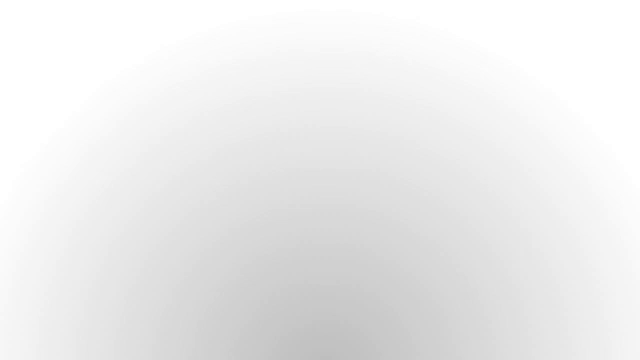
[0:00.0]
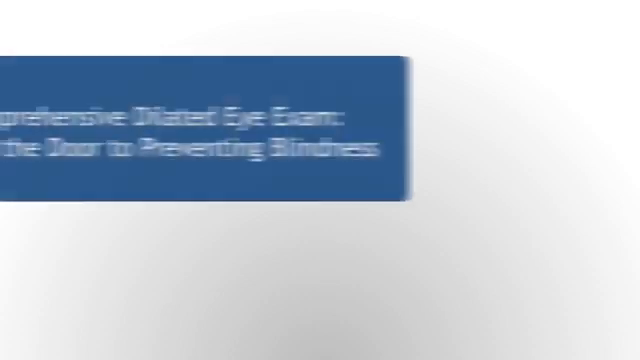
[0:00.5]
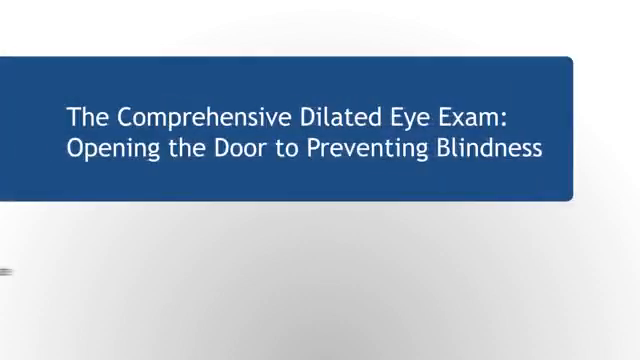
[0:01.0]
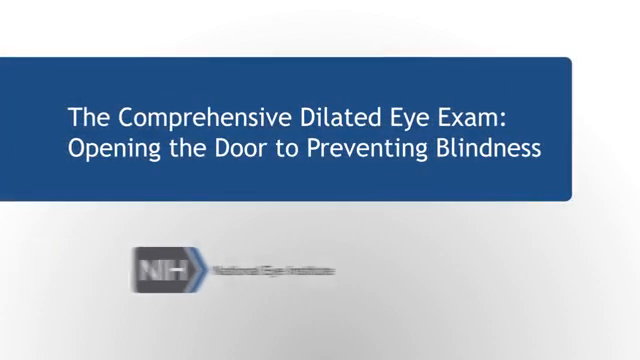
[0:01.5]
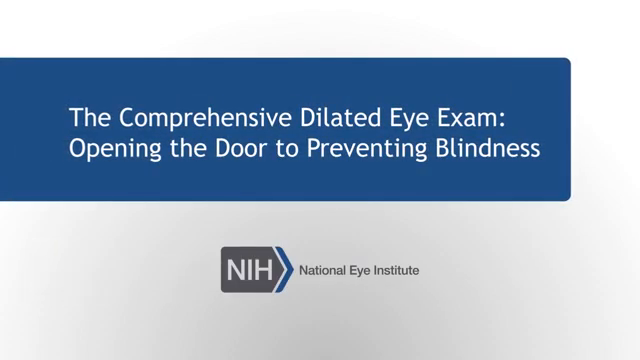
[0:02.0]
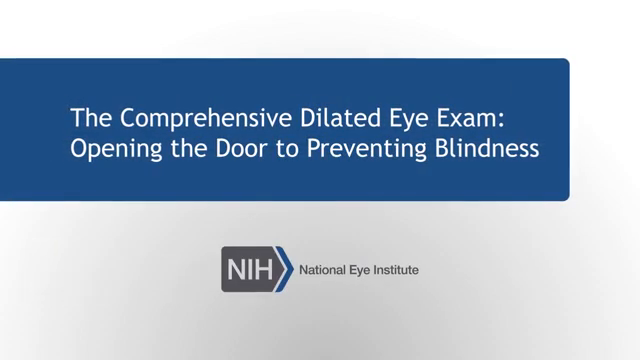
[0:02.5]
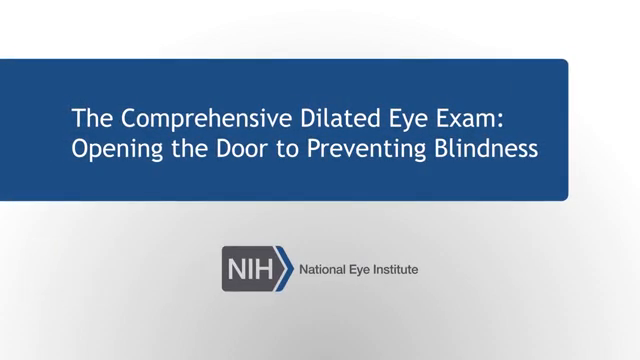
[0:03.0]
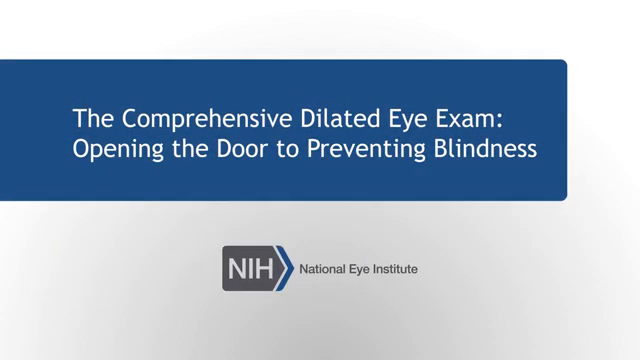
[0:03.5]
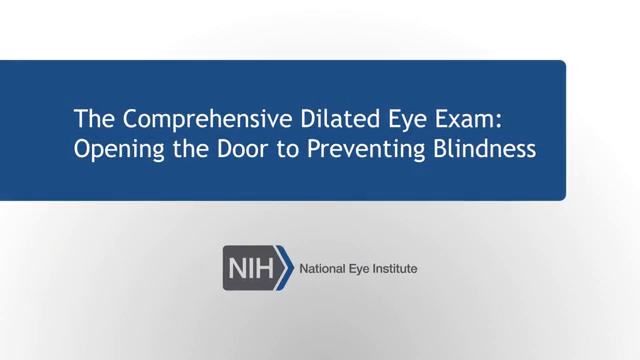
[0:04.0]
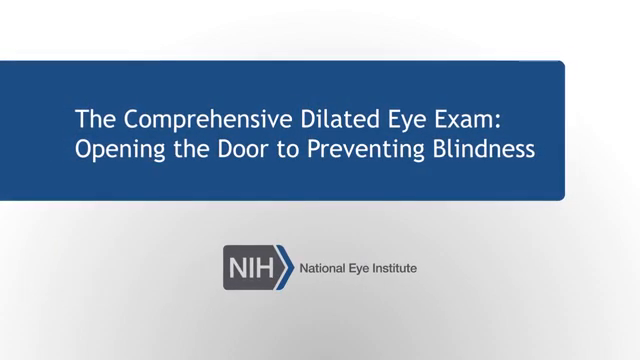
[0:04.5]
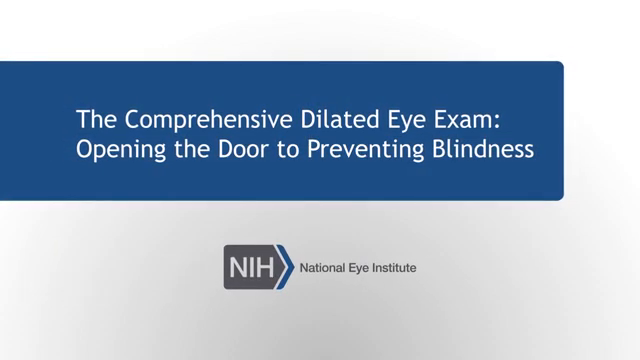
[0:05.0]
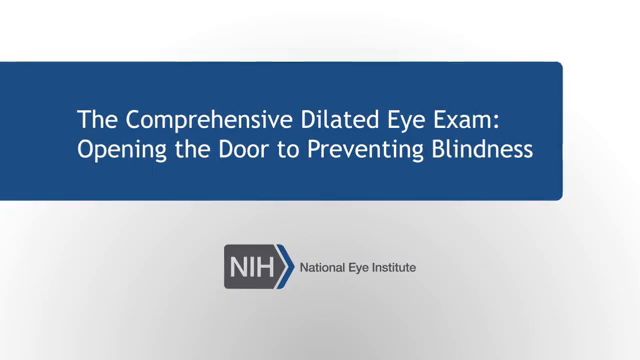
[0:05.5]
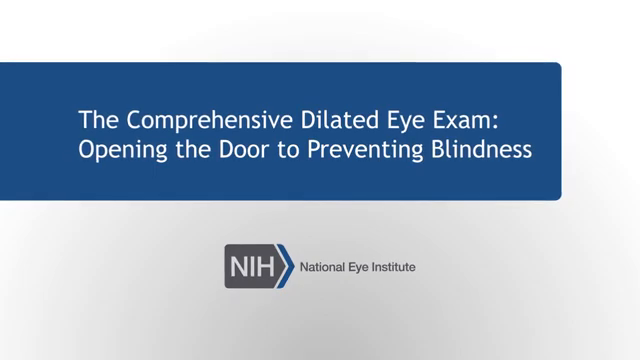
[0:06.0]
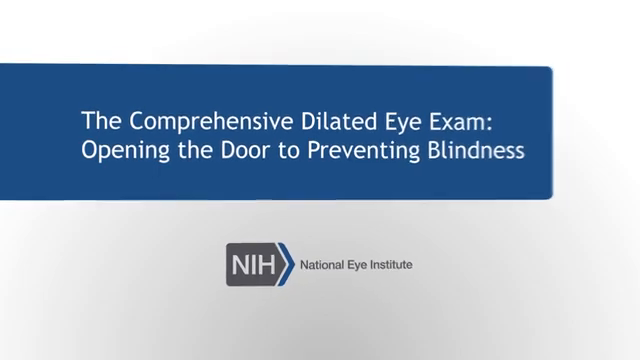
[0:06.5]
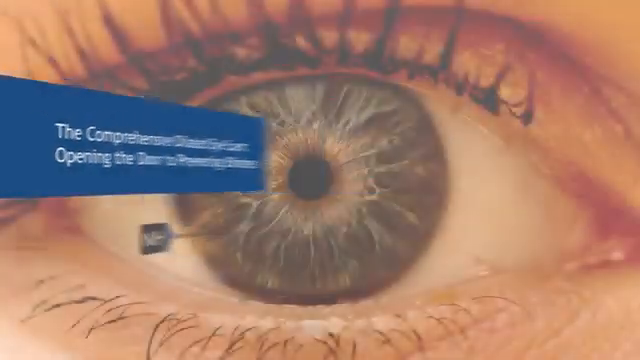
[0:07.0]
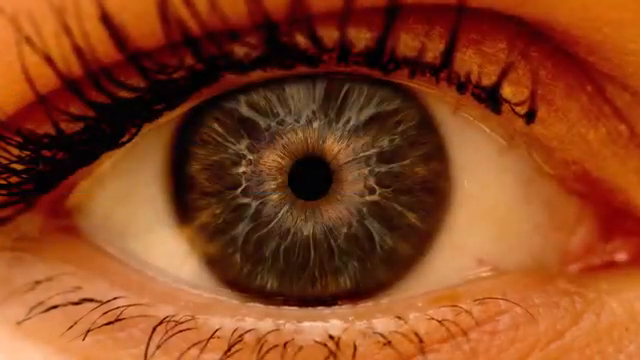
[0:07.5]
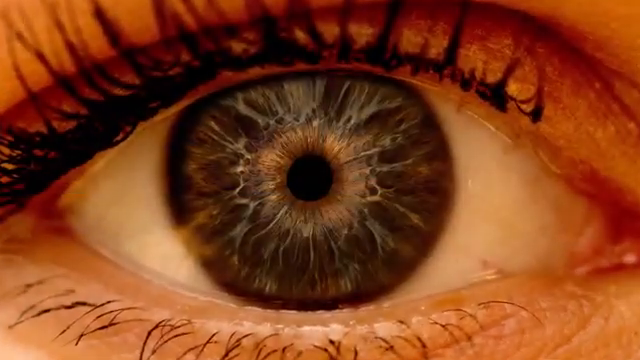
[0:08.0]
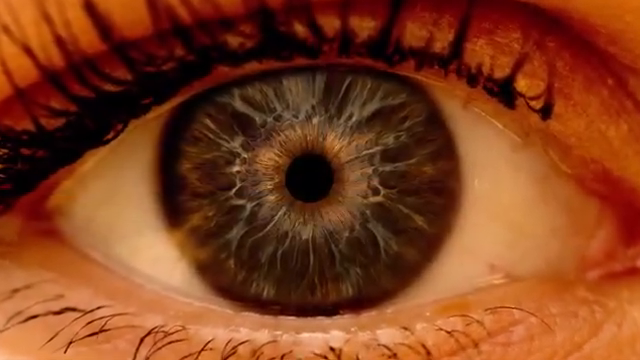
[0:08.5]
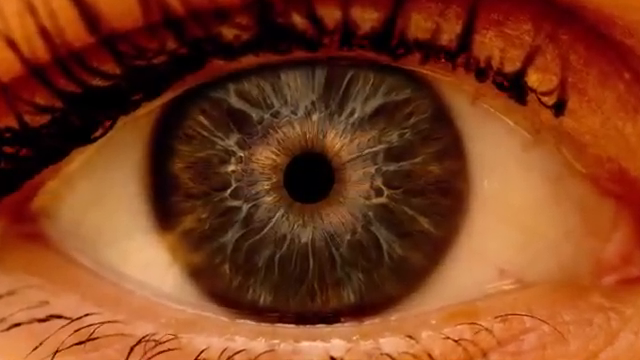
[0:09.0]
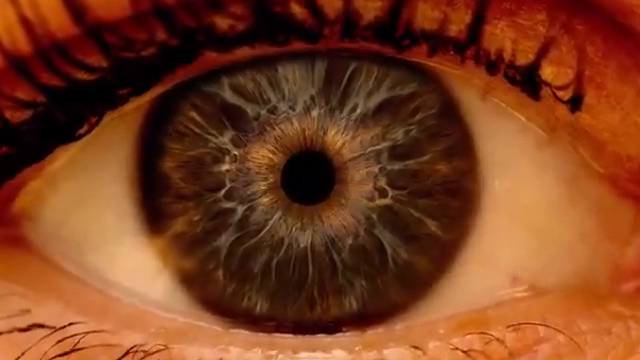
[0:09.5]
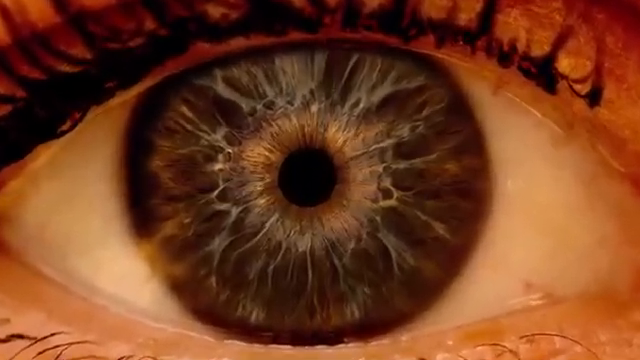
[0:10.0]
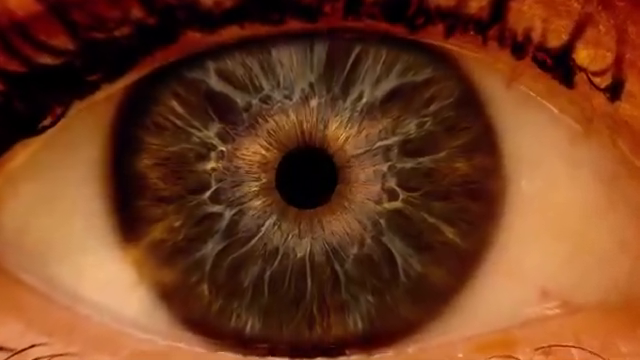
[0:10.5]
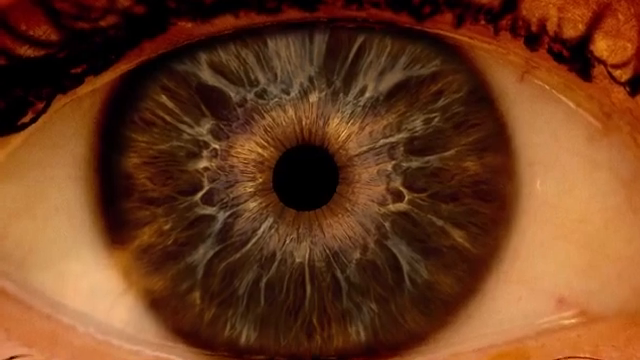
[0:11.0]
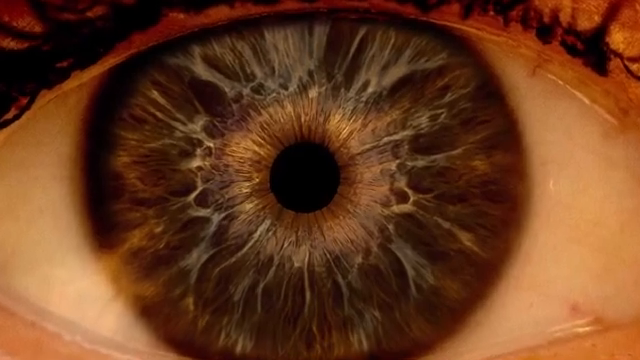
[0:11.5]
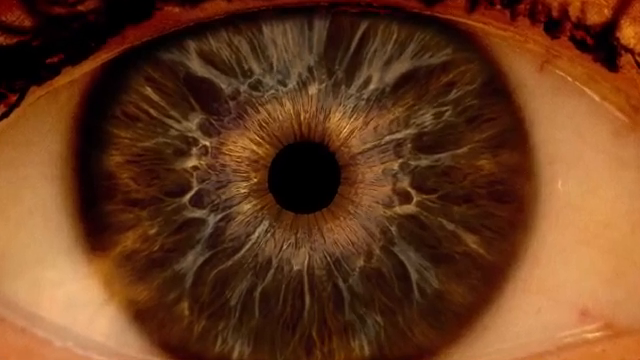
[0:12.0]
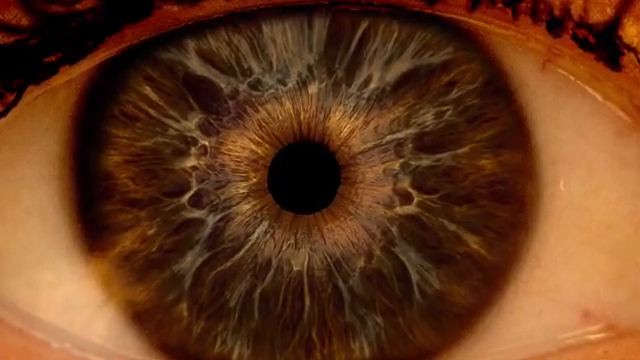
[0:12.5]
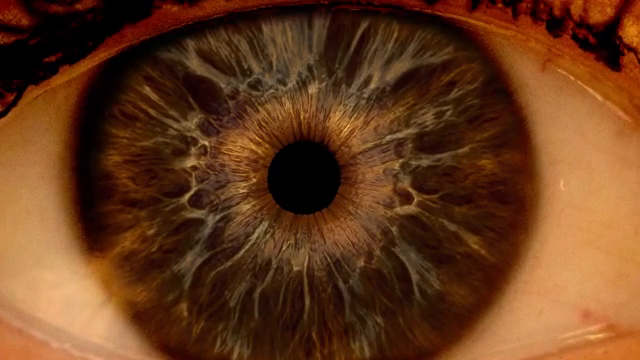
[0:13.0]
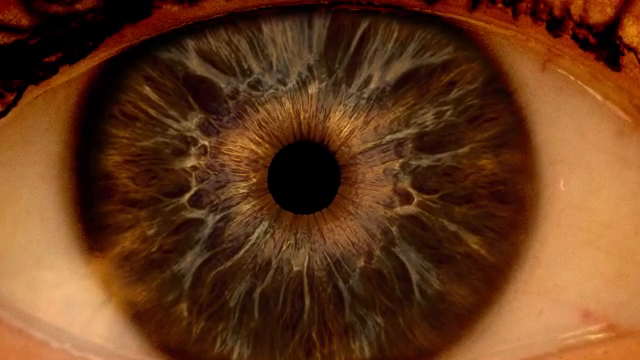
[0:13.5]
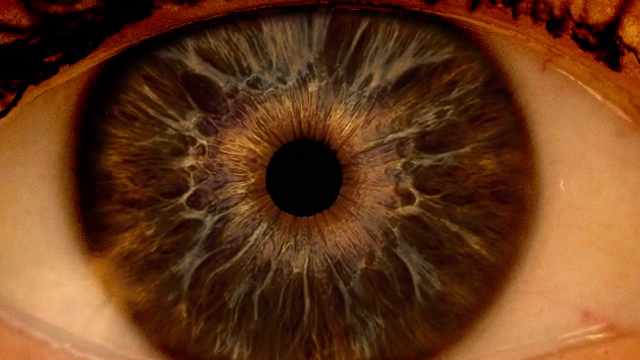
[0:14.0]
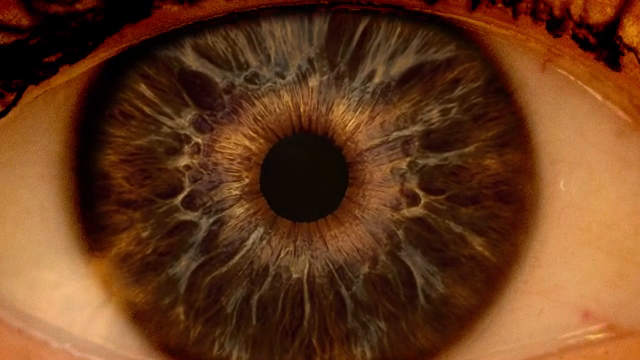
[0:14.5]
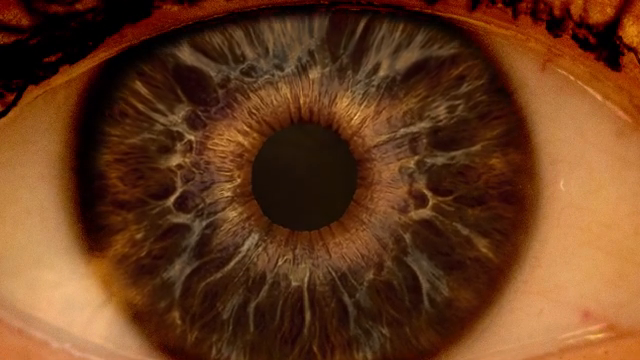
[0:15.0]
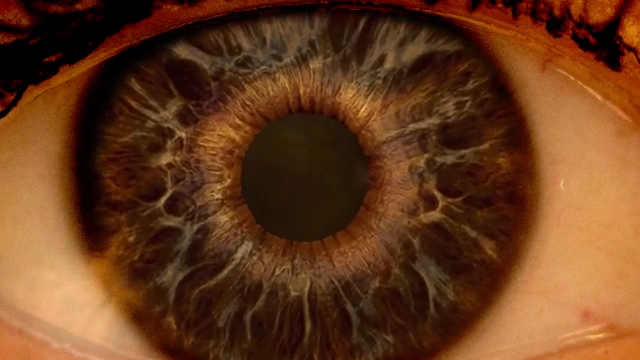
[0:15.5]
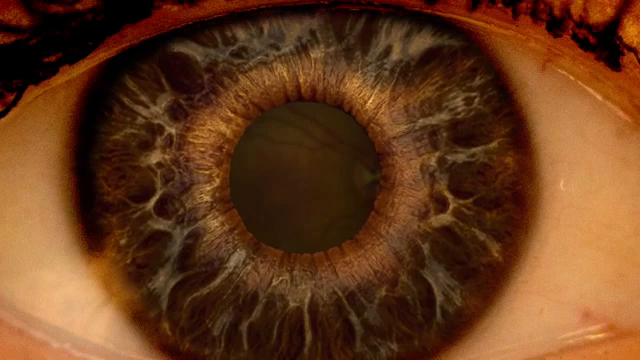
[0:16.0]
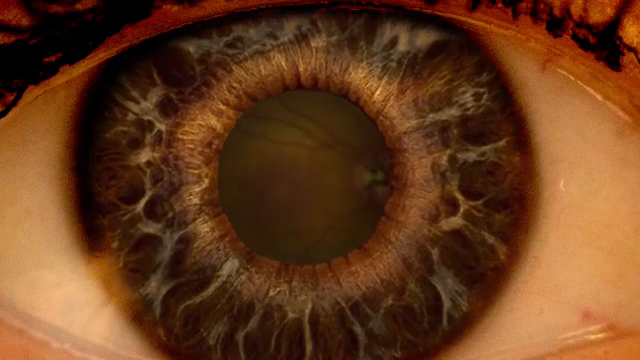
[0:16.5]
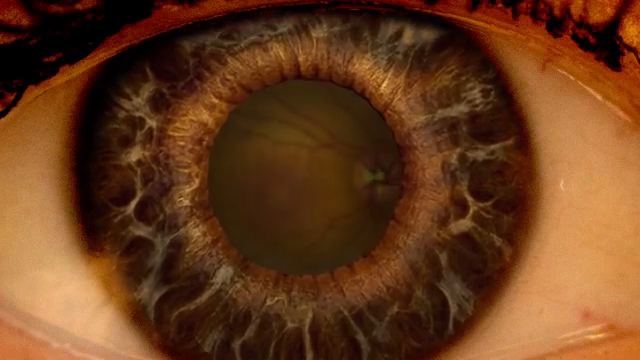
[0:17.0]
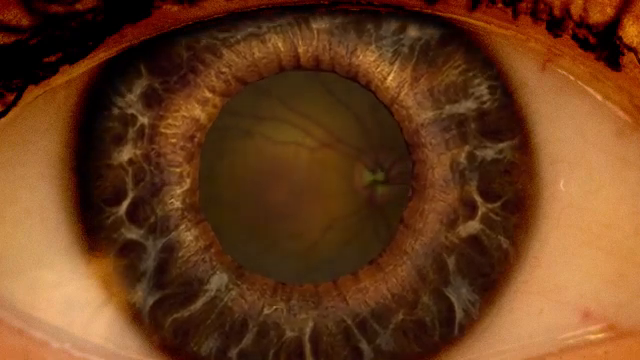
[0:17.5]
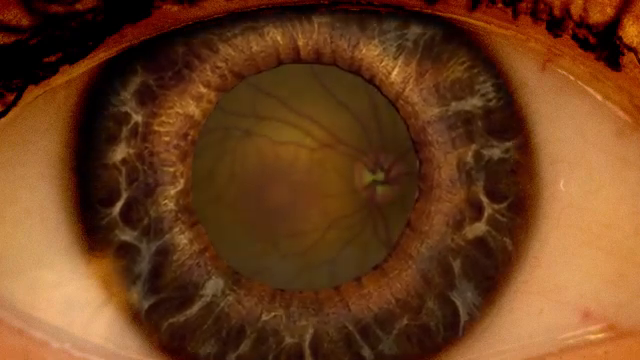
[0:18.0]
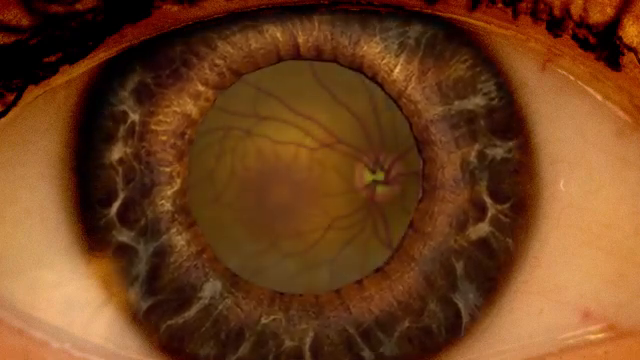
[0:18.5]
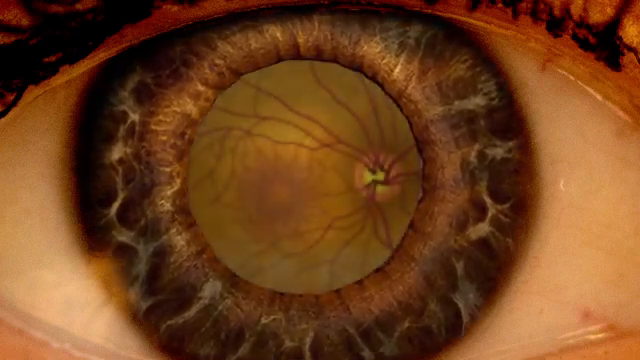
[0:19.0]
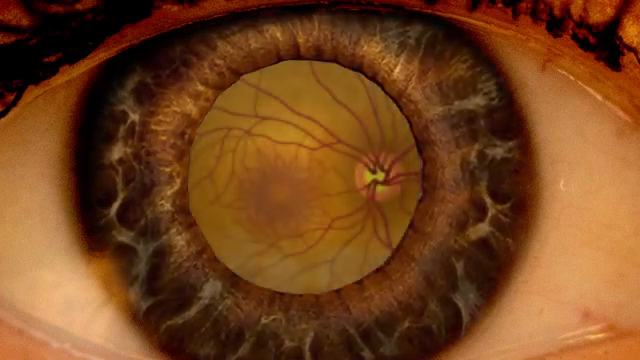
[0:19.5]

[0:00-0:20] The video opens with "NIH" and the title "Opening the door to preventing blindness" by the National Eye Institute. It then shows an actual iris of an eye and zooms into it. The iris has a black dot in the middle with a lot of detail surrounding it, including green coloration around the black dot. The iris then expands, revealing the blood vessels behind it, deep into the eye, including a tiny bit of blood vessels just behind the iris. The view then goes to a completely white screen.